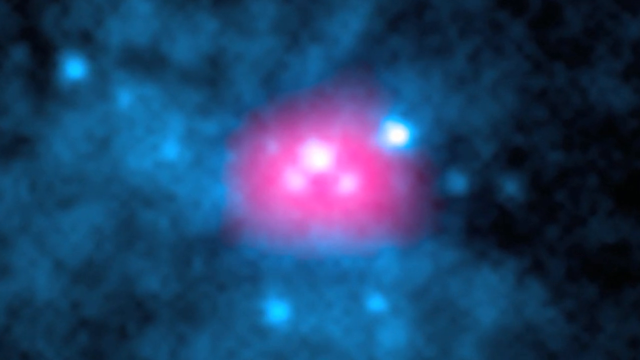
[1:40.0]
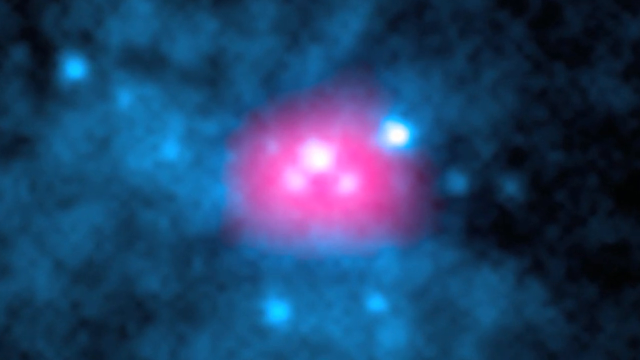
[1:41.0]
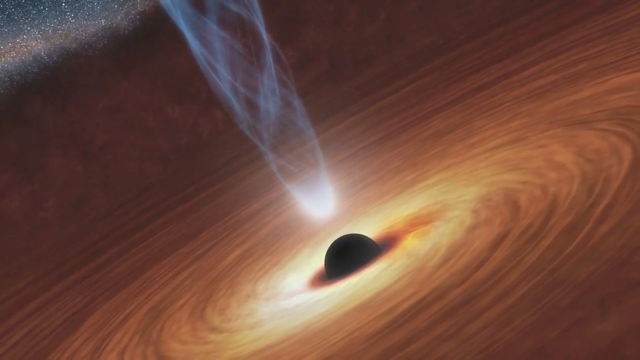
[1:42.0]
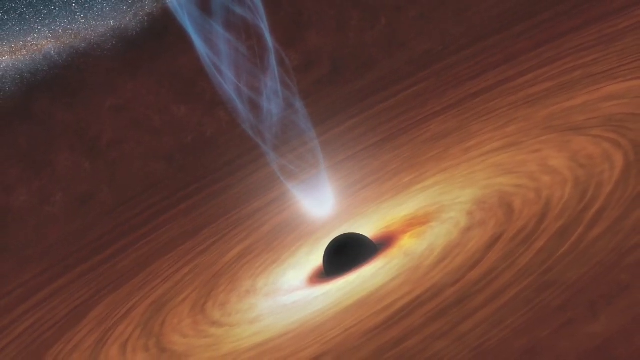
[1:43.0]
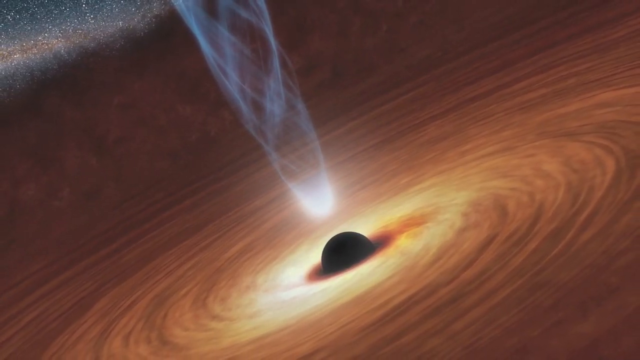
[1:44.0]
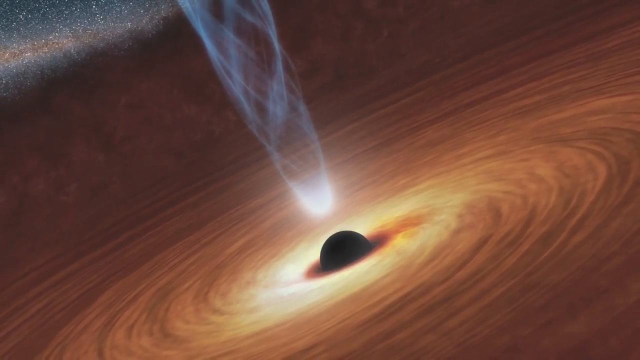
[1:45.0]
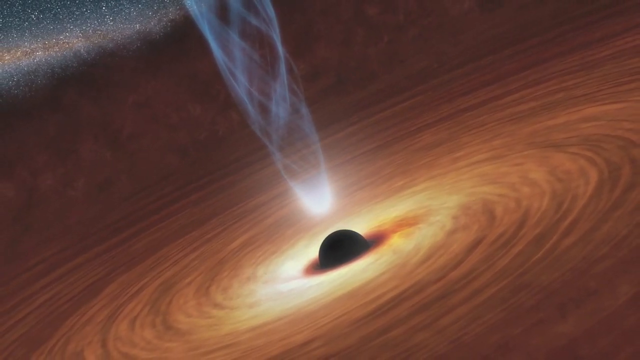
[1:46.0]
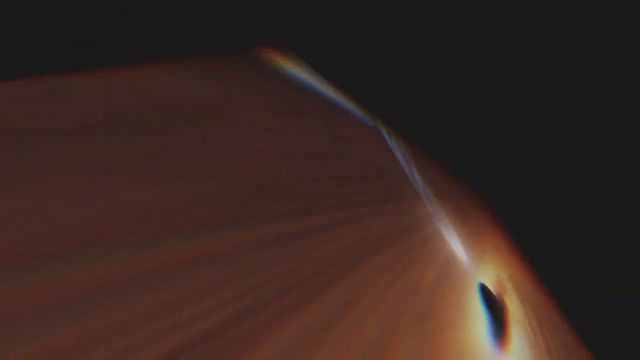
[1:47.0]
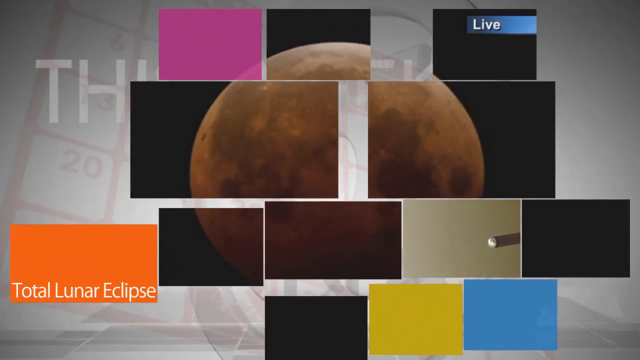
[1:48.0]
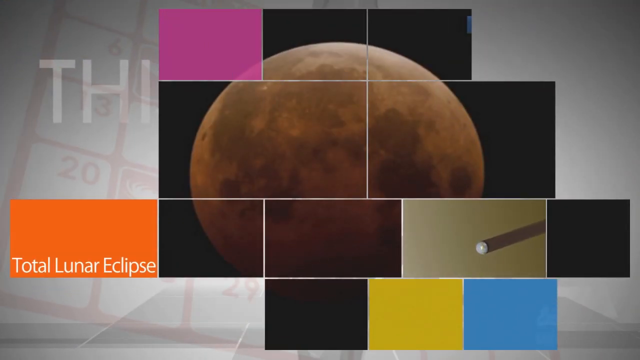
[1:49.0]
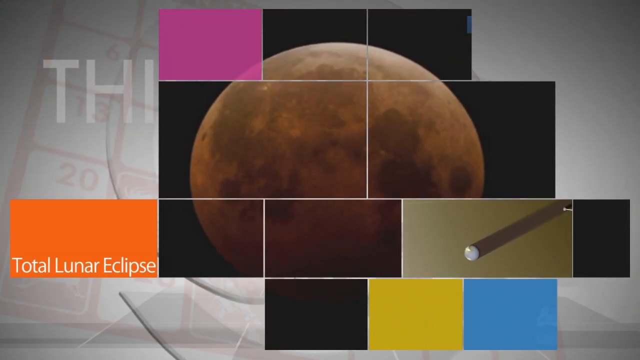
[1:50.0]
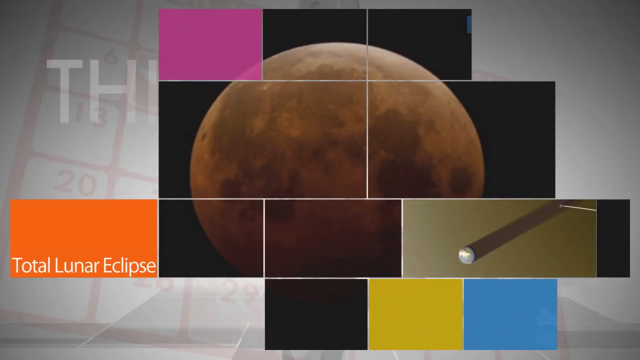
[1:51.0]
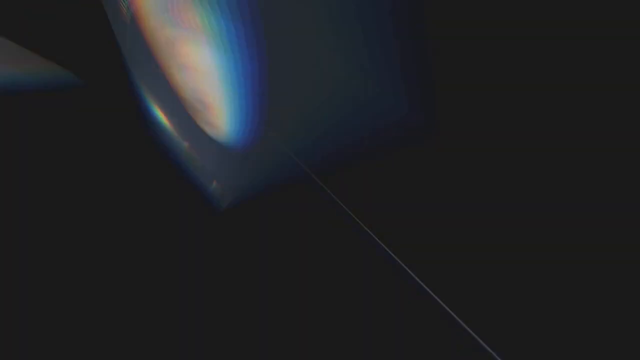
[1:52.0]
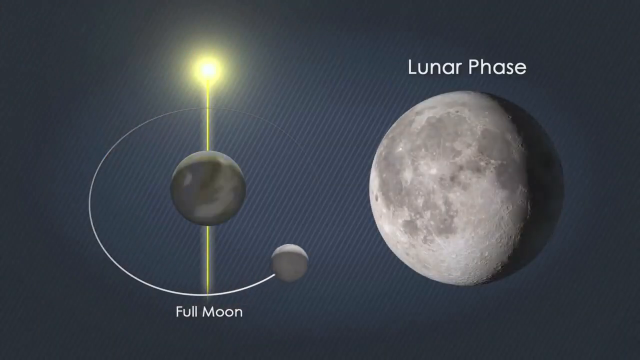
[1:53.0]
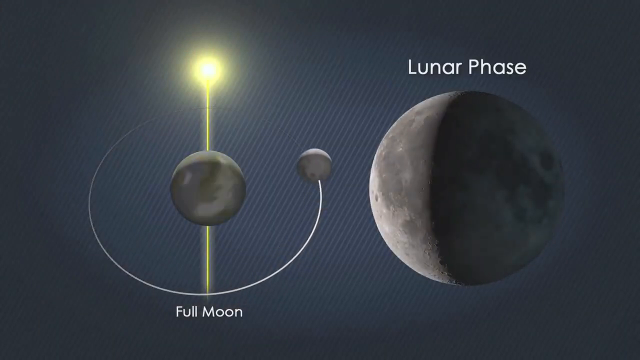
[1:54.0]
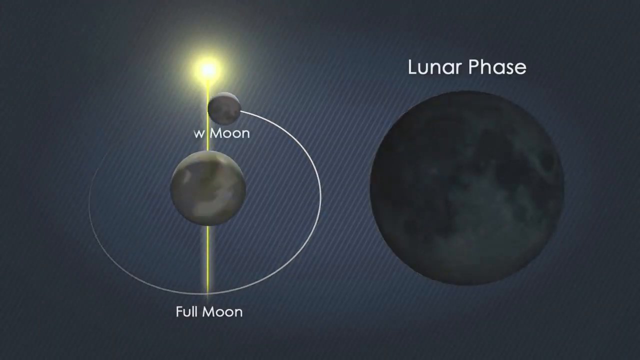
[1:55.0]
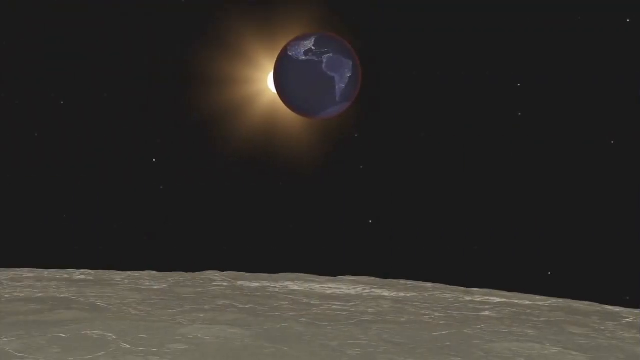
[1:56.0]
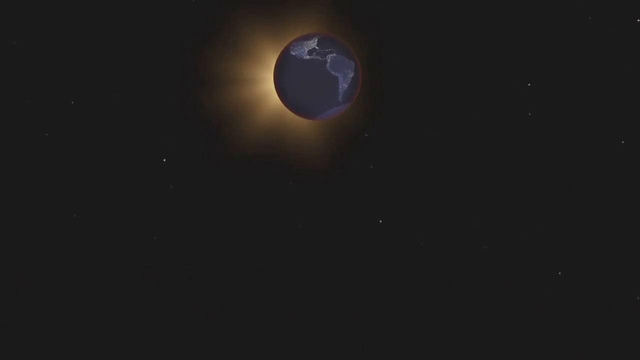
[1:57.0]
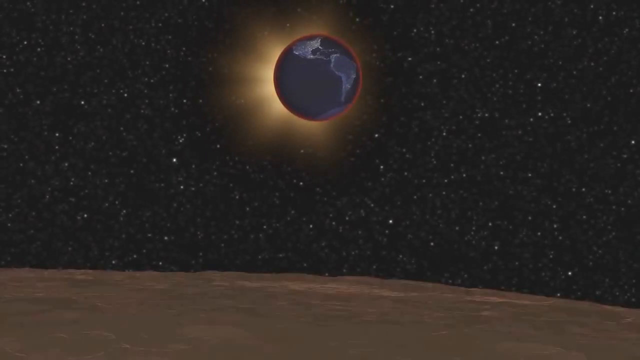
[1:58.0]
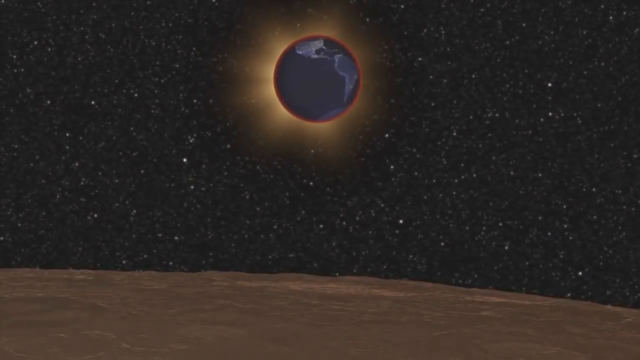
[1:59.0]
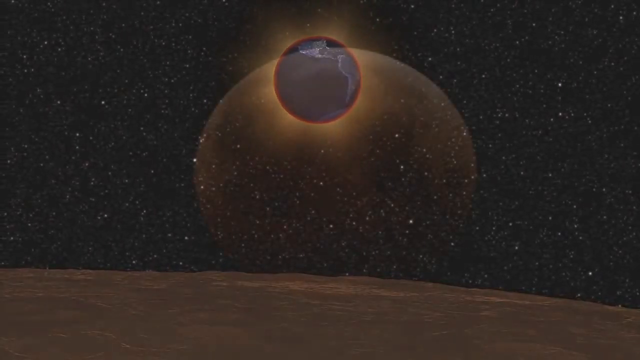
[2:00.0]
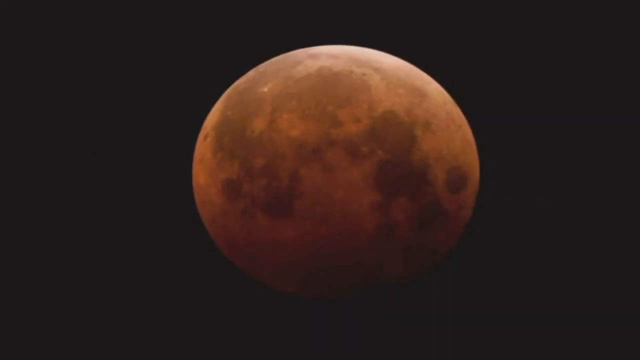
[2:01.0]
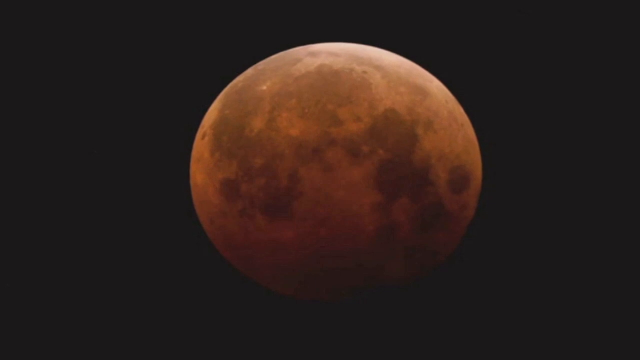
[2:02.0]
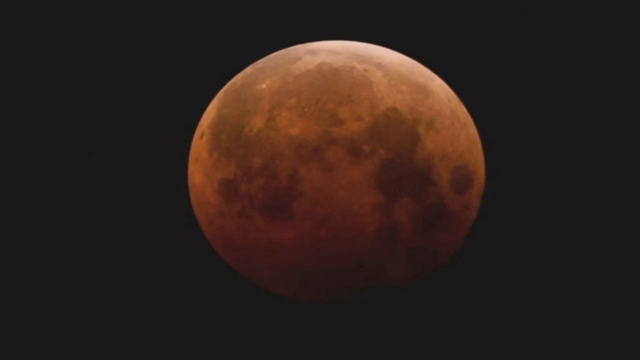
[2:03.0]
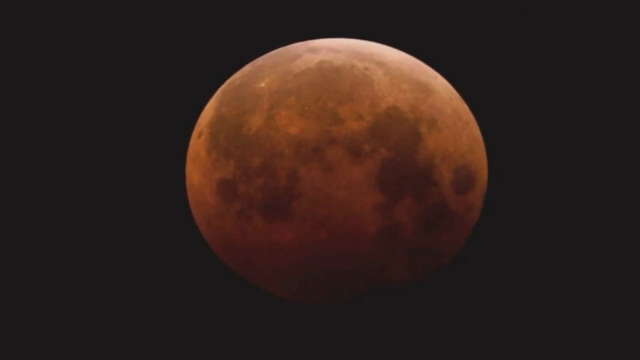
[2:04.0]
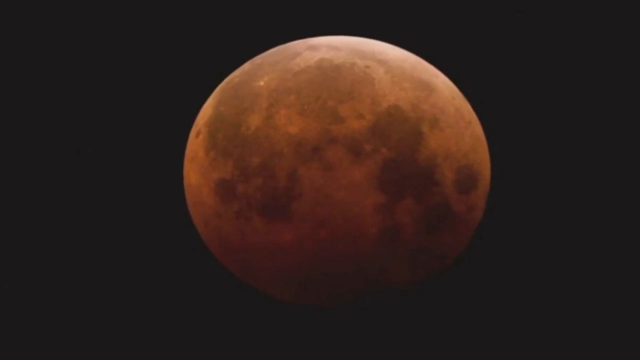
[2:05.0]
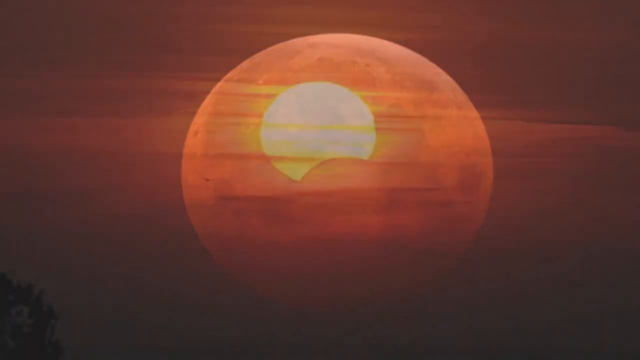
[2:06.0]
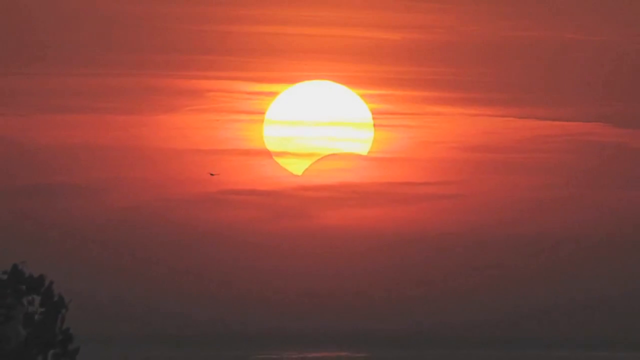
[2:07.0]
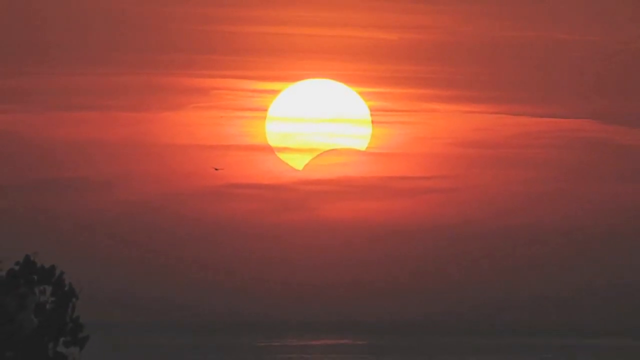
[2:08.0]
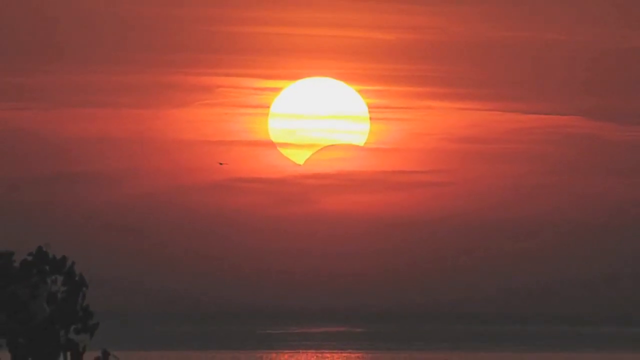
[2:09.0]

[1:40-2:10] Three dots appear in a zoomed-in galaxy picture, almost like an upside-down Mickey Mouse head; they are very bright white dots surrounded by an intense magenta-pink glow, with hazy blue and white dots around them. A representation follows showing an almost hurricane-like swirl of clouds around a giant black ball, with a beam of light shooting out of it into the stars. The text "total lunar eclipse" appears with an image of the moon. The lunar phase of new moon is shown, along with diagrams of how a lunar eclipse happens: a full moon, a new moon and the different lunar phases, a cutout of the moon and how the light affects it, and the Earth passing between the Sun and the moon. Finally, a picture shows the moon glowing red.